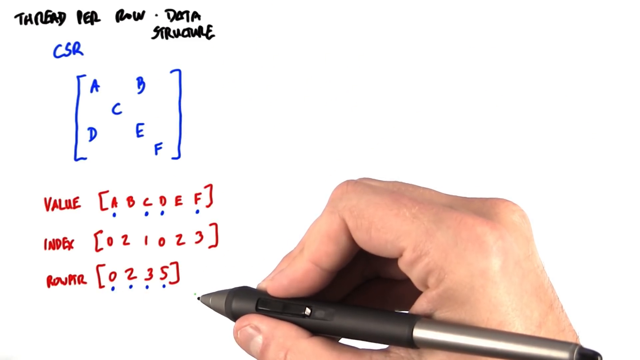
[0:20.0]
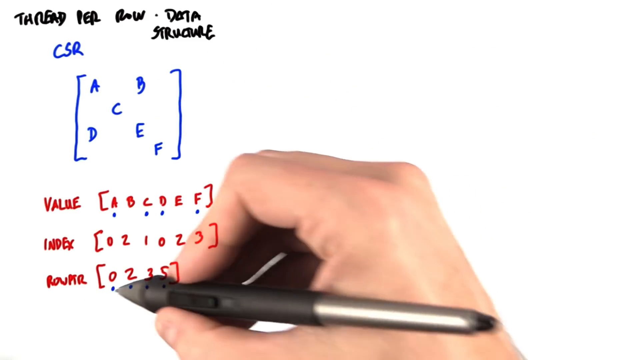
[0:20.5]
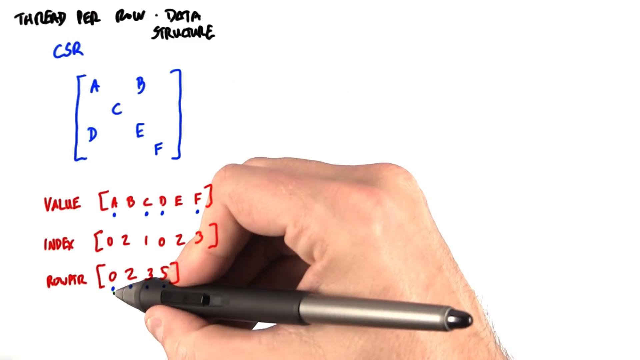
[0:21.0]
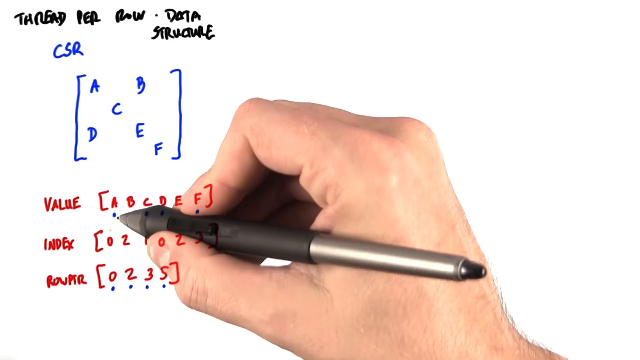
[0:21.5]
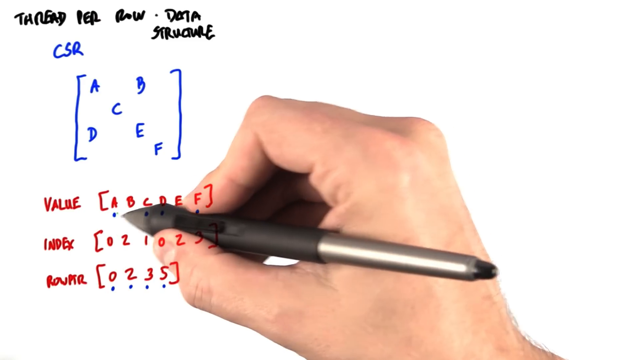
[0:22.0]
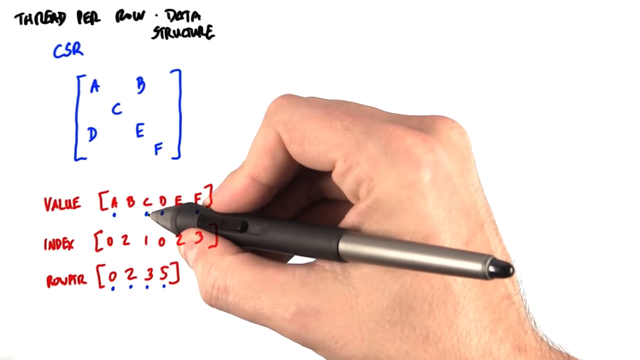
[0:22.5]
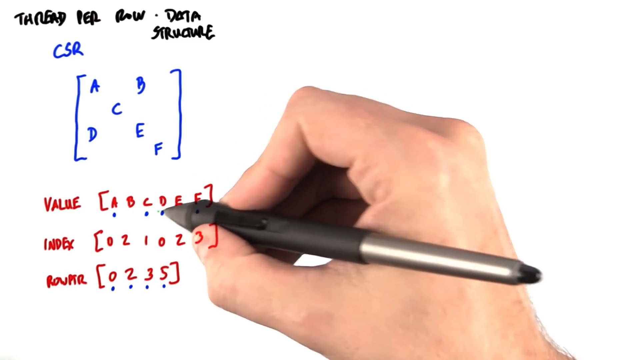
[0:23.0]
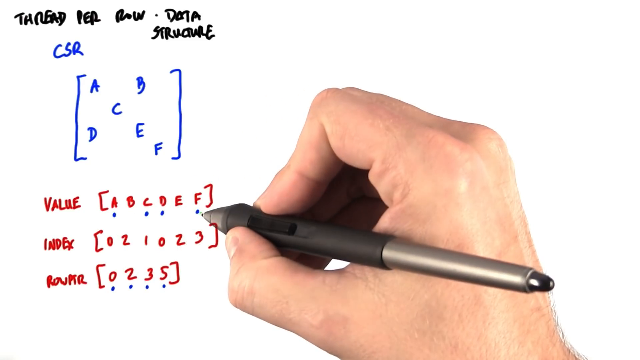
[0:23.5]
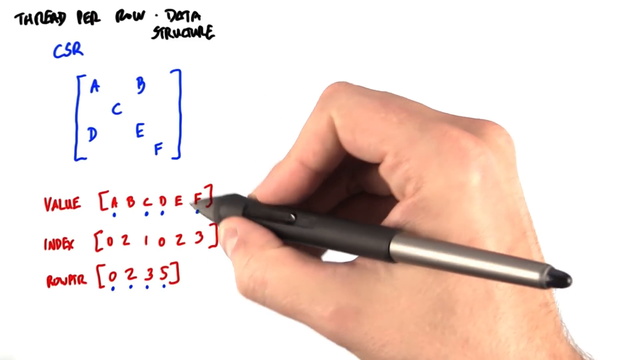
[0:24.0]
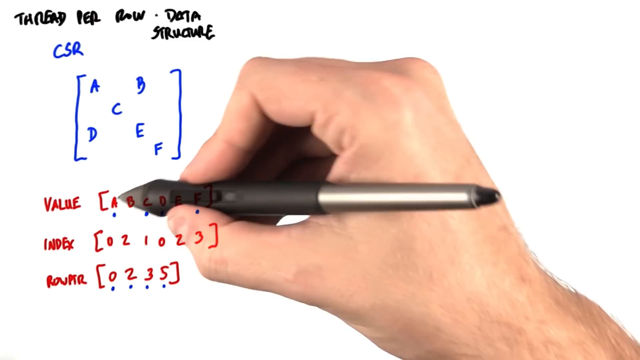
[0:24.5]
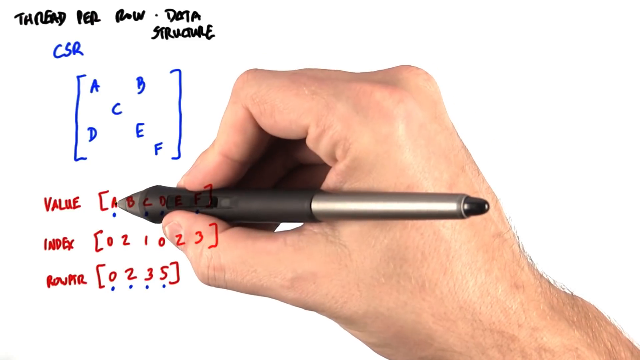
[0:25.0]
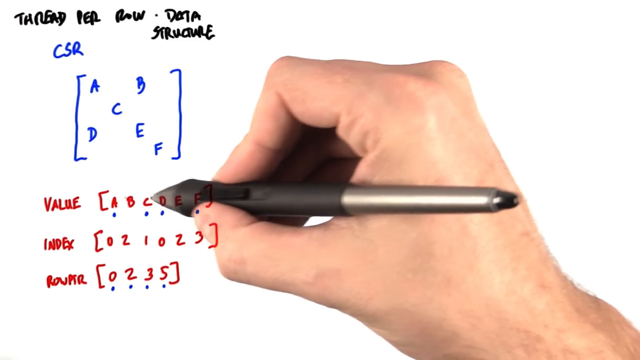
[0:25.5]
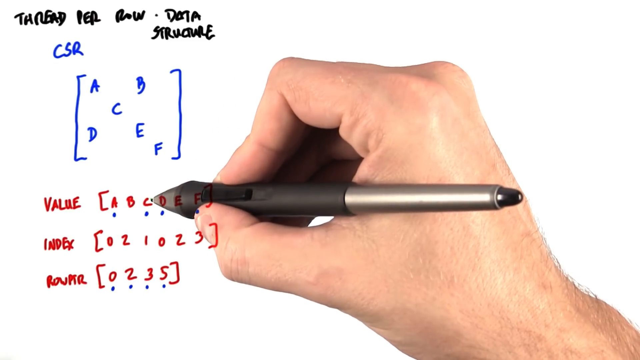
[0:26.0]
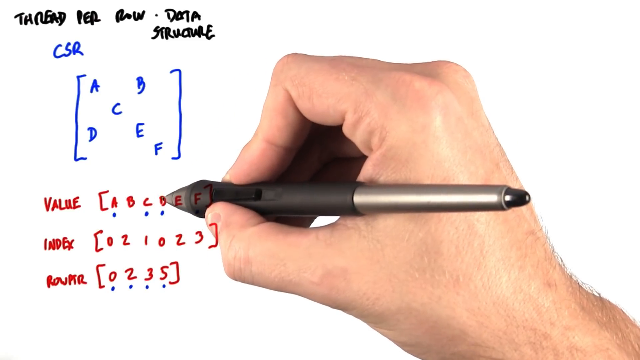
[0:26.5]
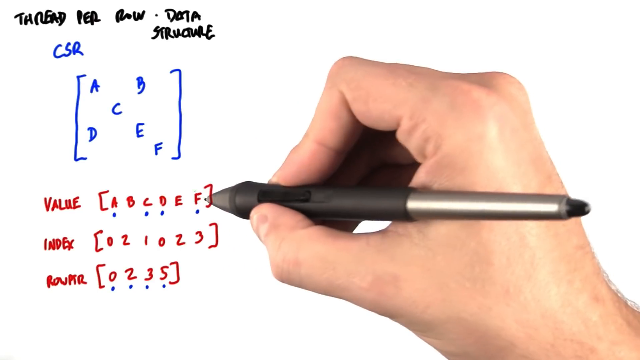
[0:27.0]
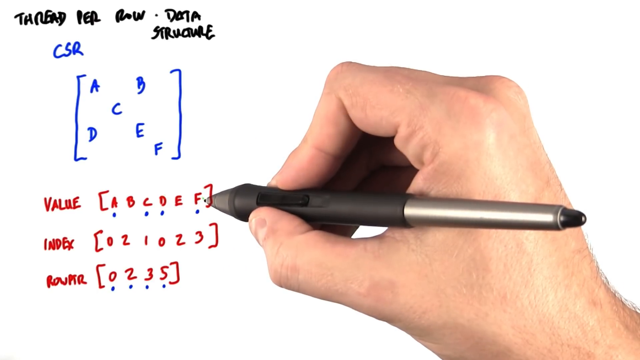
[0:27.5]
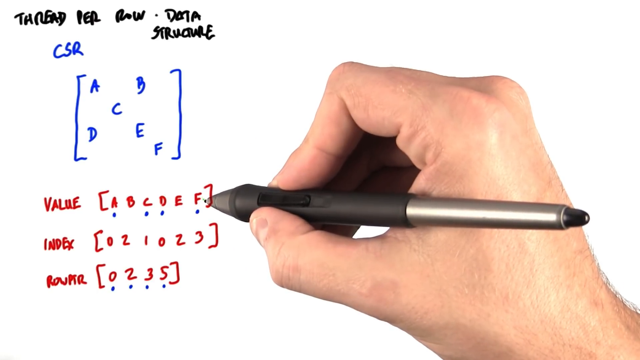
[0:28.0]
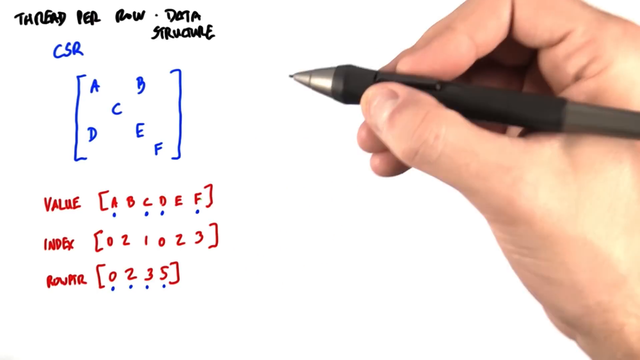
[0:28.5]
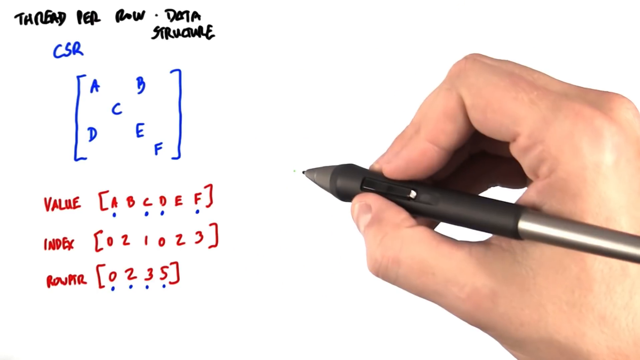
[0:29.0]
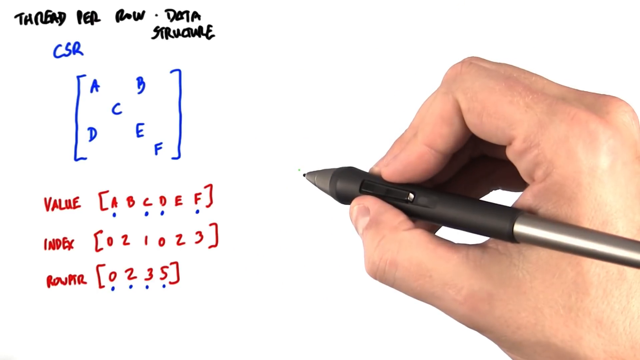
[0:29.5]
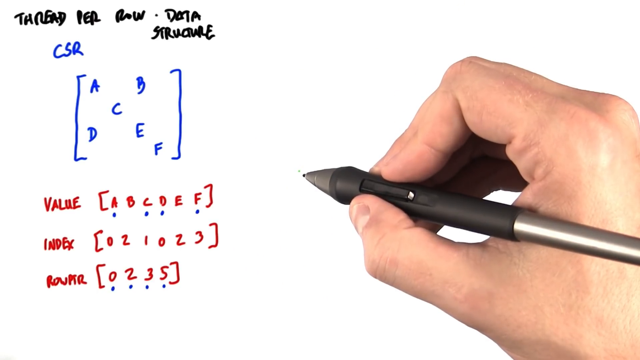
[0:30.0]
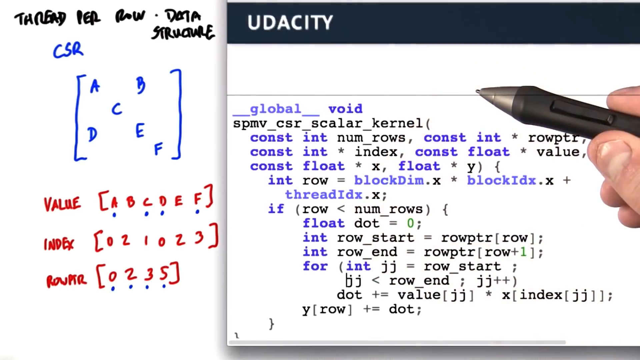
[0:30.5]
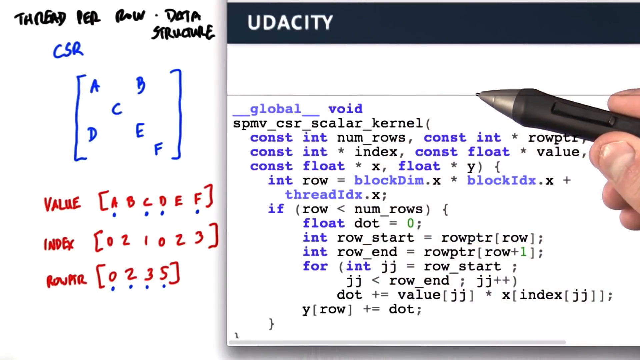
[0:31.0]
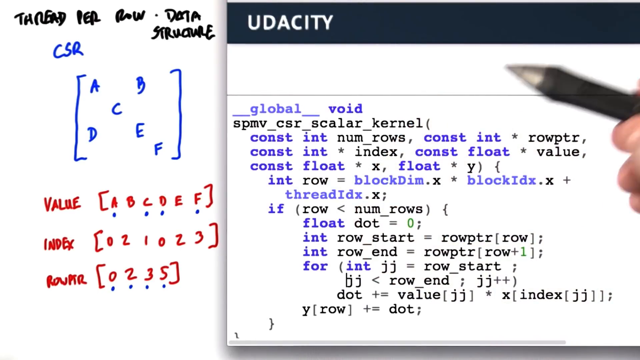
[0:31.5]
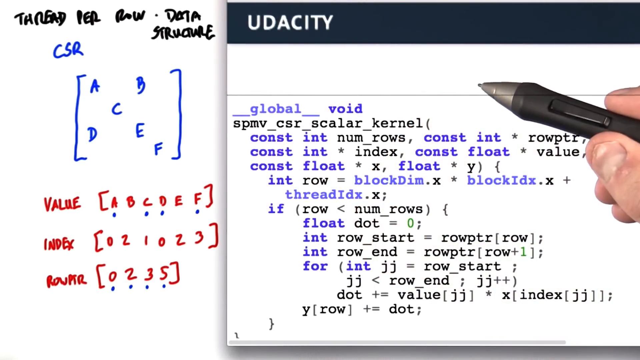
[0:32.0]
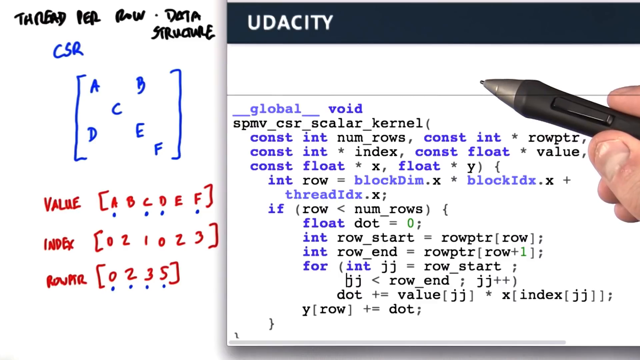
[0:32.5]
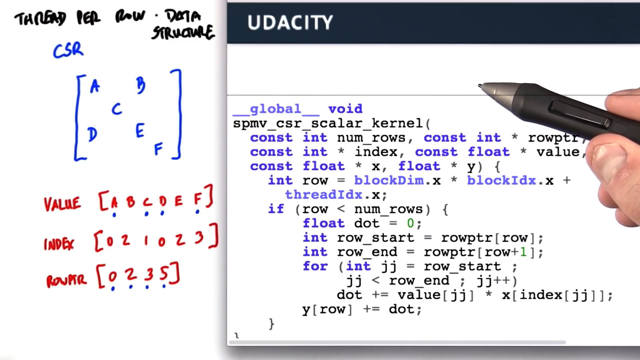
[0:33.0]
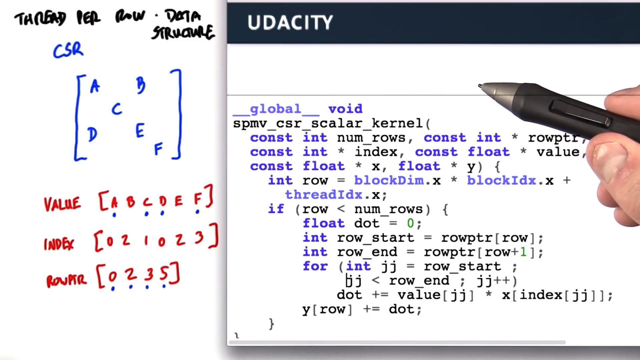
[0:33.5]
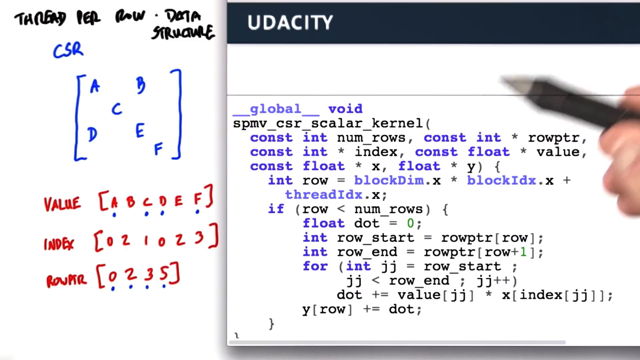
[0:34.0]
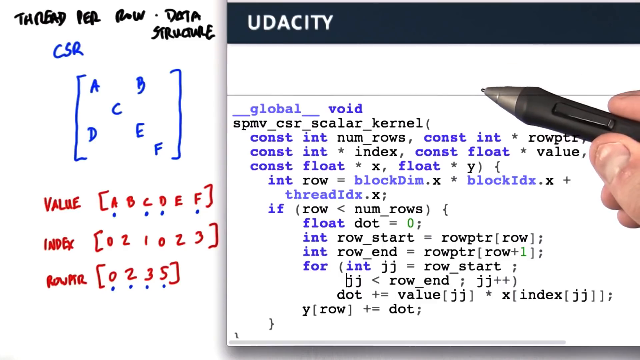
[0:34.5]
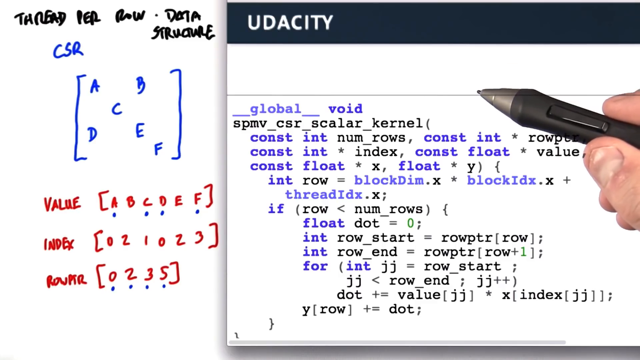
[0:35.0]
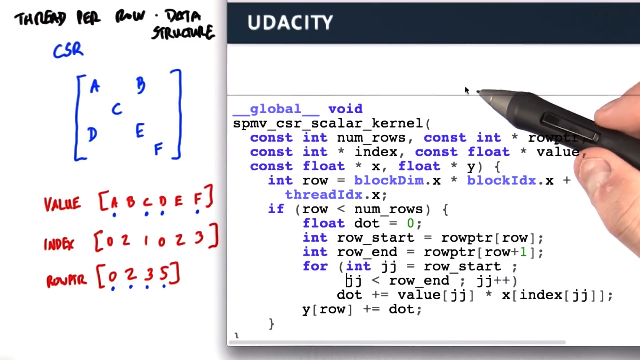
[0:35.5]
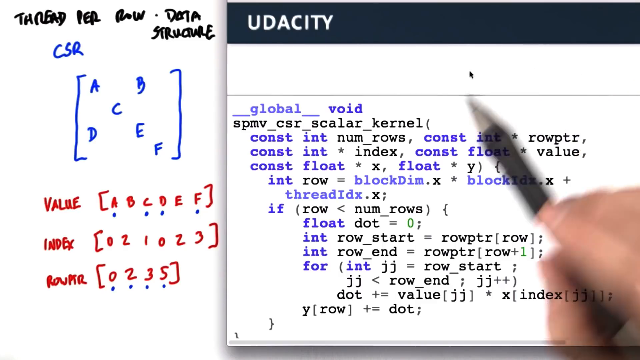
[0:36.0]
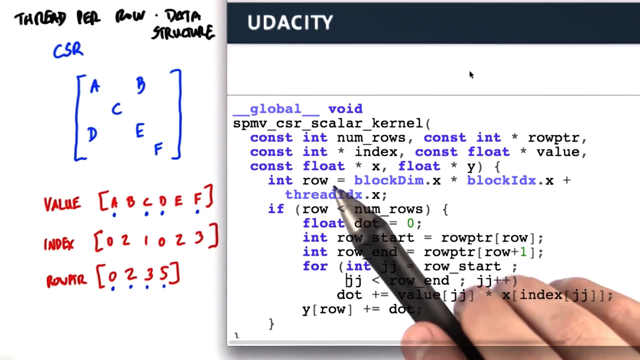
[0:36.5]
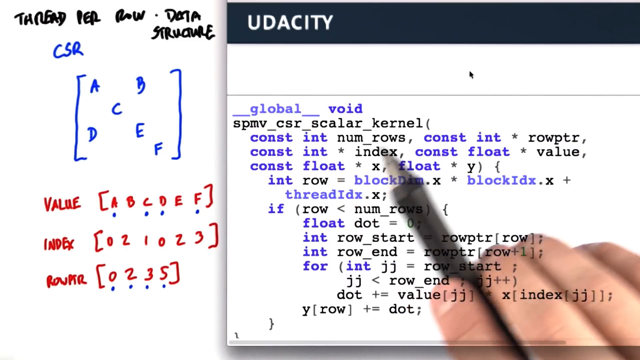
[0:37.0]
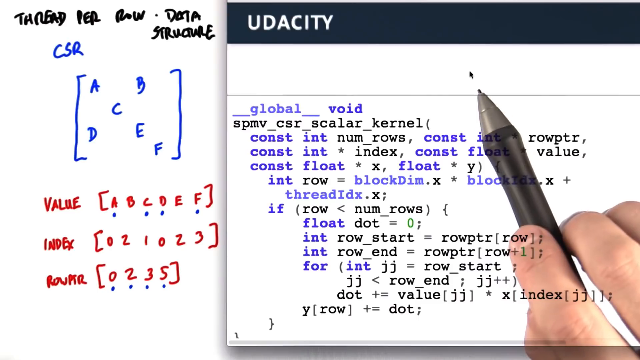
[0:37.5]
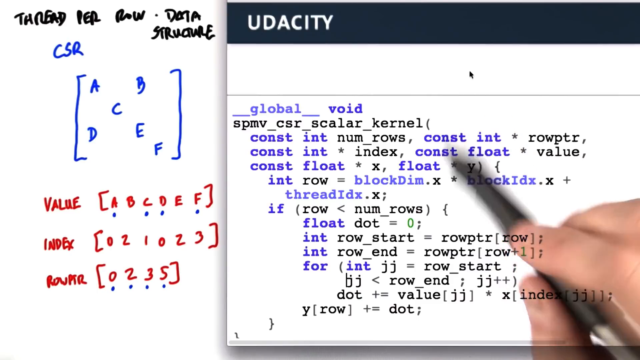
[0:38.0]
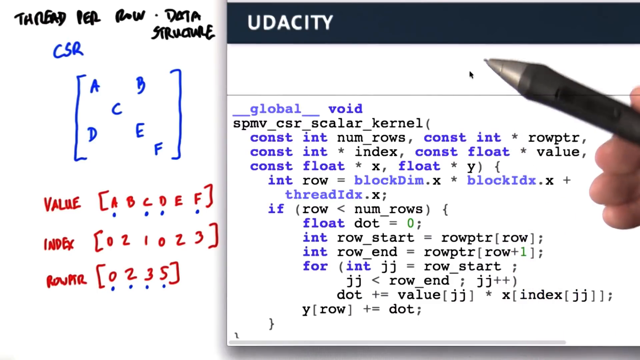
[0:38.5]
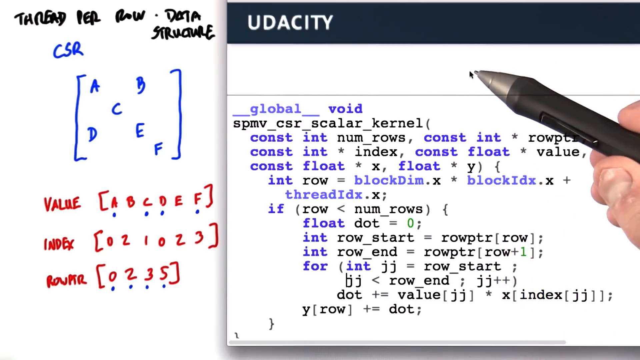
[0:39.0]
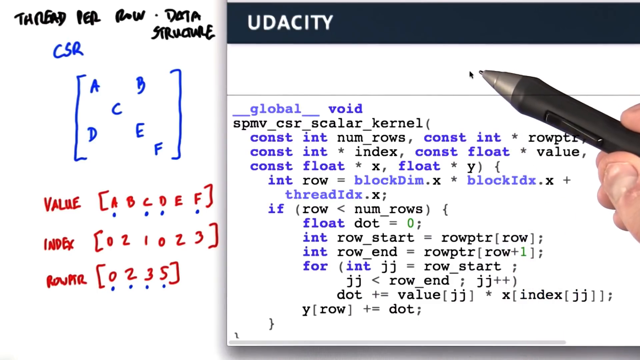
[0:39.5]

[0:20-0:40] The pen point is slightly to the left, and the entire hand and pen are down on the screen, ending with the wrist at the bottom right. The same diagram remains on screen, unchanged. The pen points at the number zero in the bottom row, then at A, C, D and F in the value row, and repeats A, C, D, F. The pen is lifted briefly from the screen and put back down as "Udacity" comes across the screen as an inset in a dark grey or black title bar. Code that appears to be JavaScript is on screen, typed out. The pen moves over the page a little, pointing slightly upwards; coming from the middle right, it points more toward the center-left. The pen is moved up and down, pointing to different points on the screen: first the word "float", then the line across the top. The hand comes in and out of the screen as it does so.